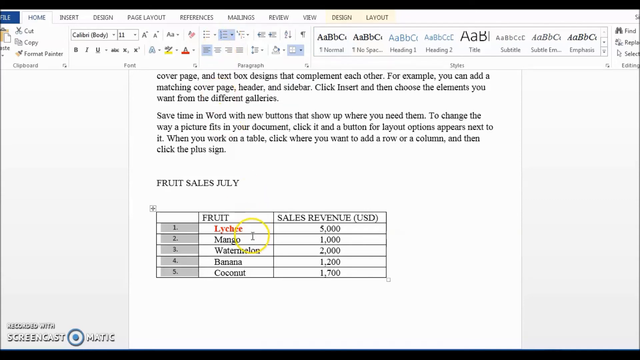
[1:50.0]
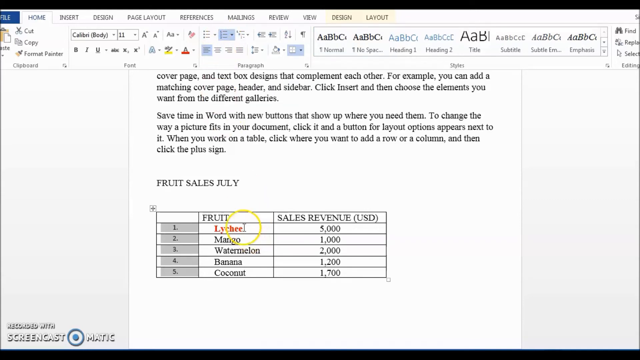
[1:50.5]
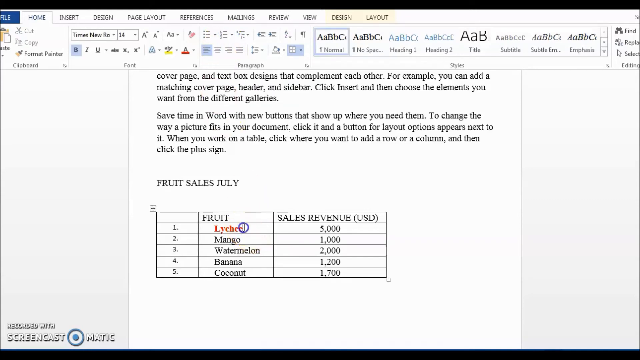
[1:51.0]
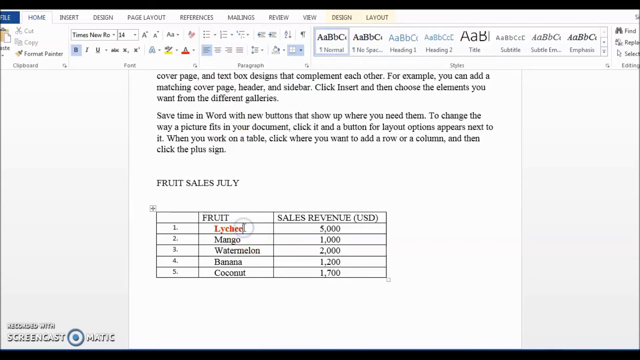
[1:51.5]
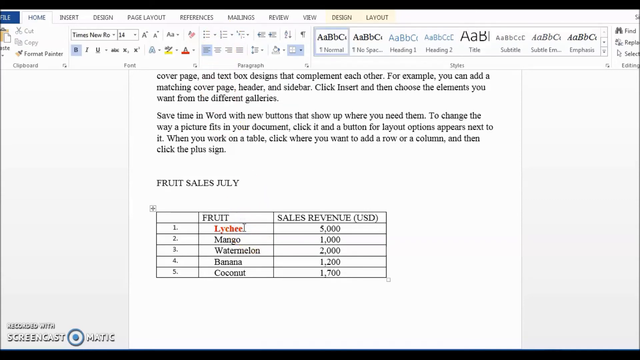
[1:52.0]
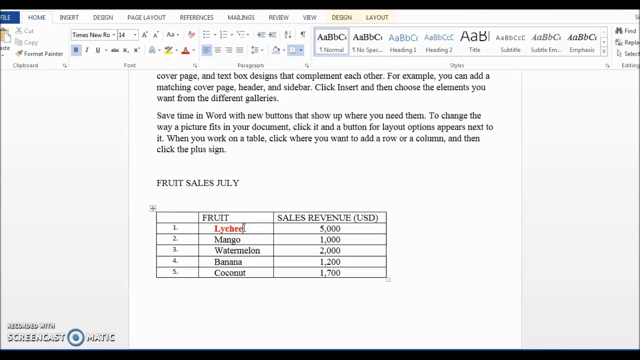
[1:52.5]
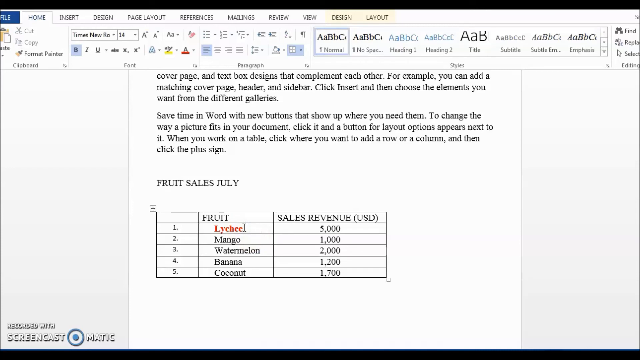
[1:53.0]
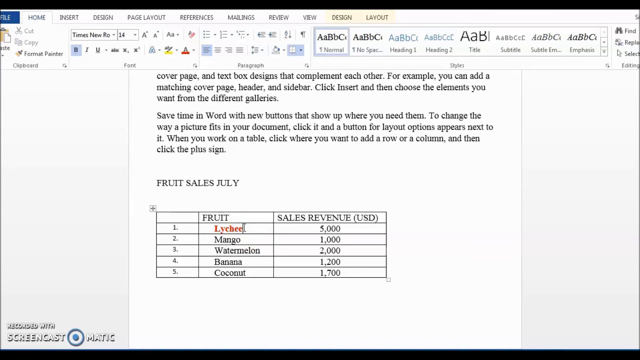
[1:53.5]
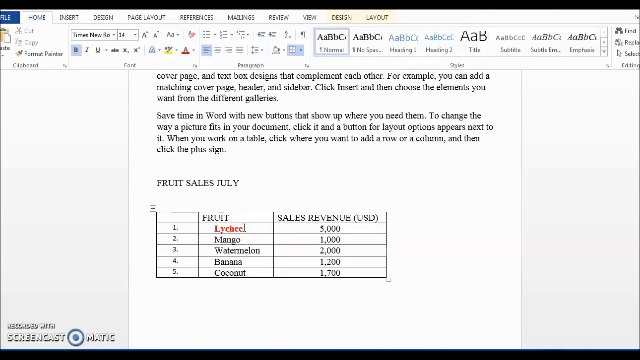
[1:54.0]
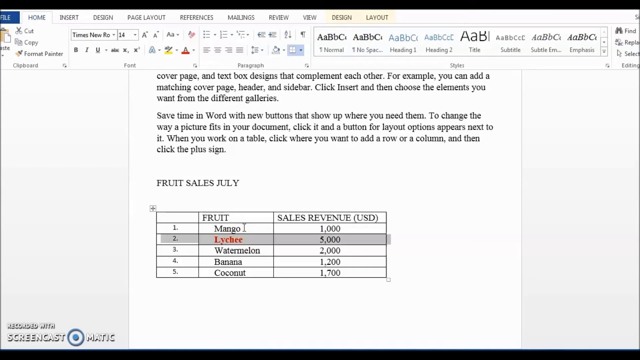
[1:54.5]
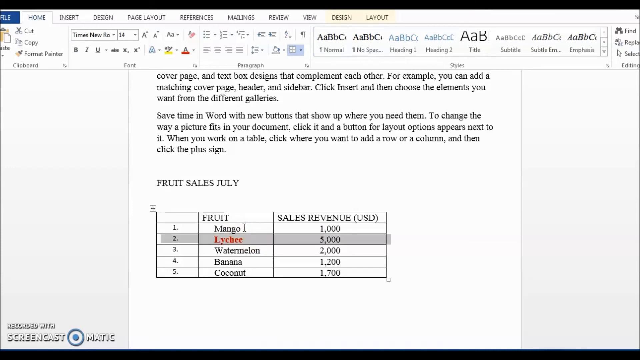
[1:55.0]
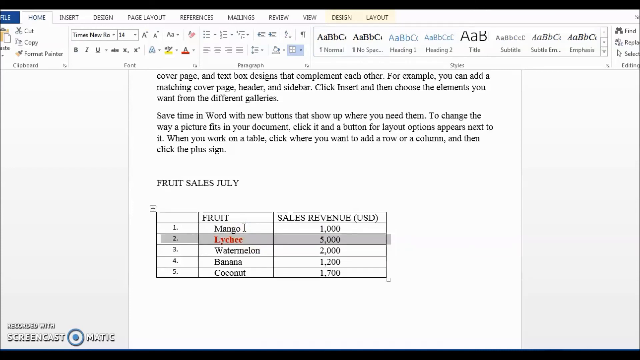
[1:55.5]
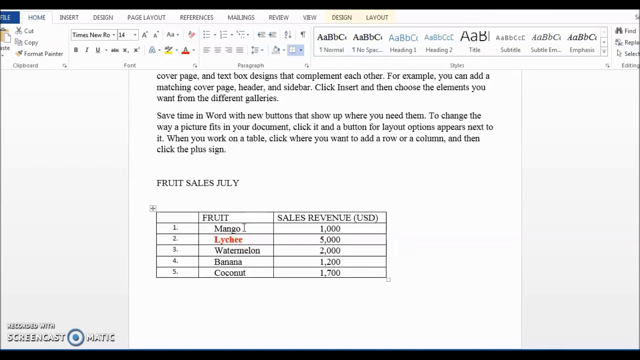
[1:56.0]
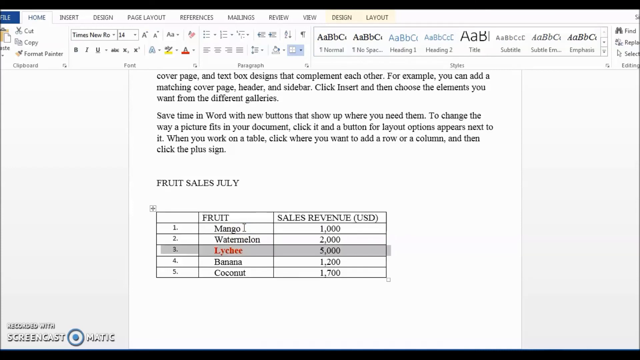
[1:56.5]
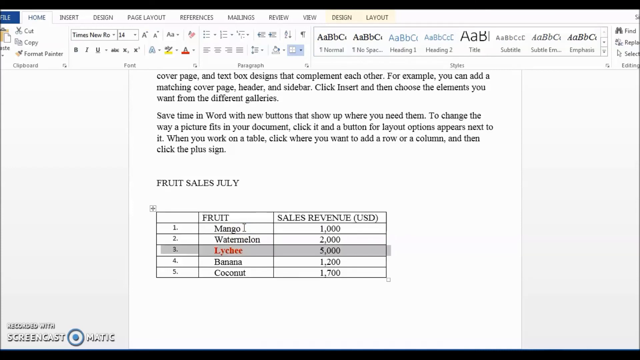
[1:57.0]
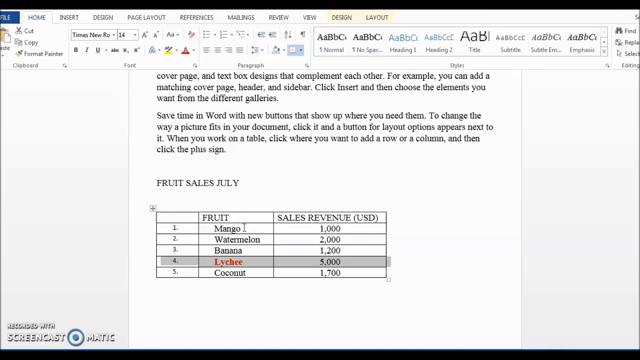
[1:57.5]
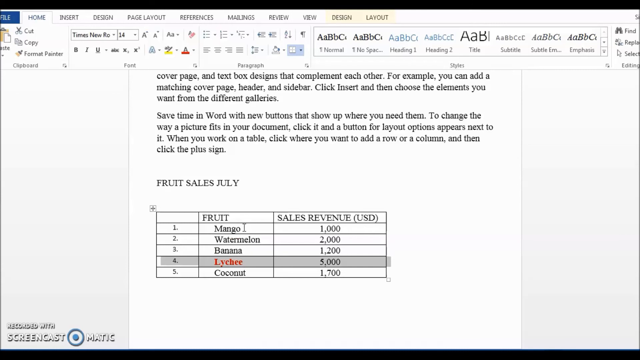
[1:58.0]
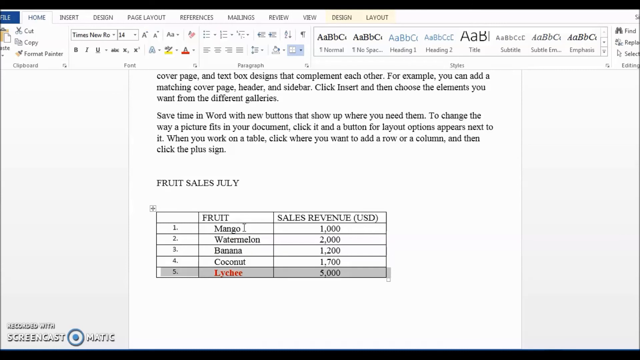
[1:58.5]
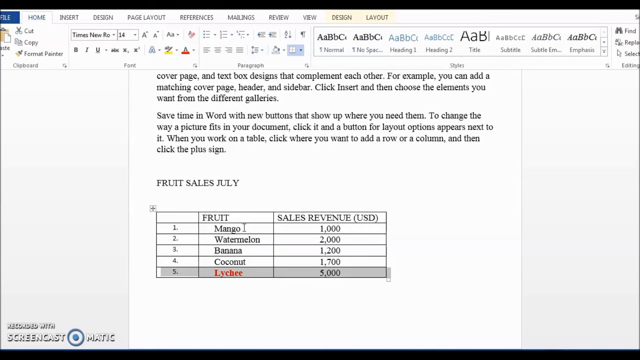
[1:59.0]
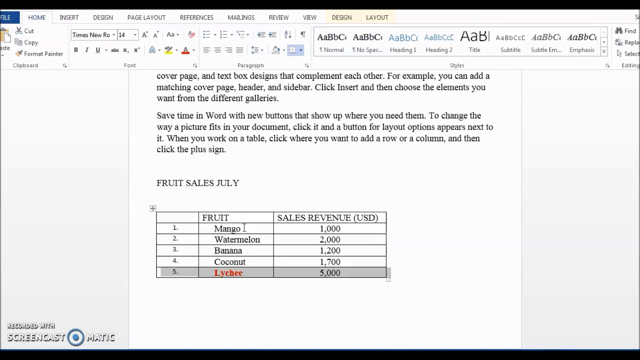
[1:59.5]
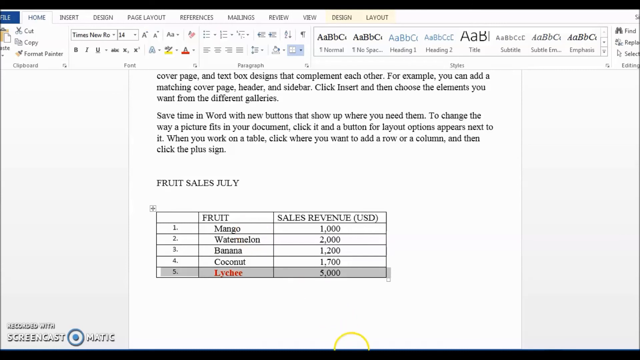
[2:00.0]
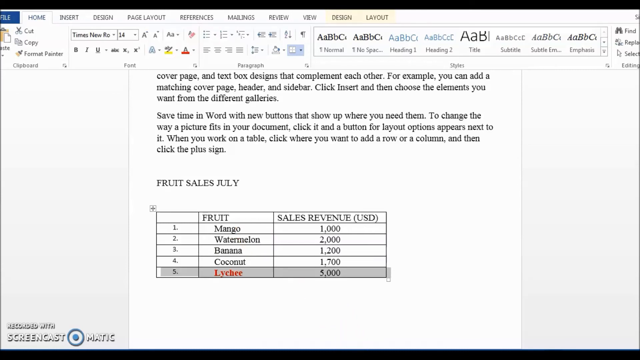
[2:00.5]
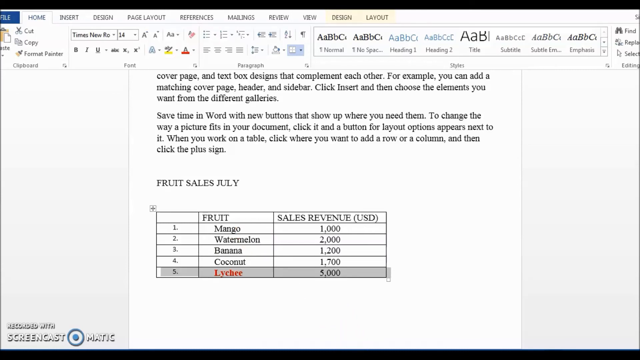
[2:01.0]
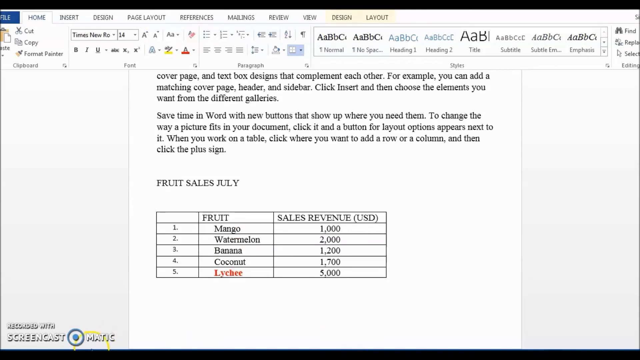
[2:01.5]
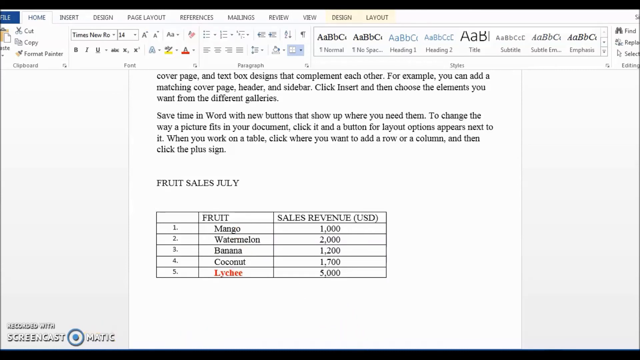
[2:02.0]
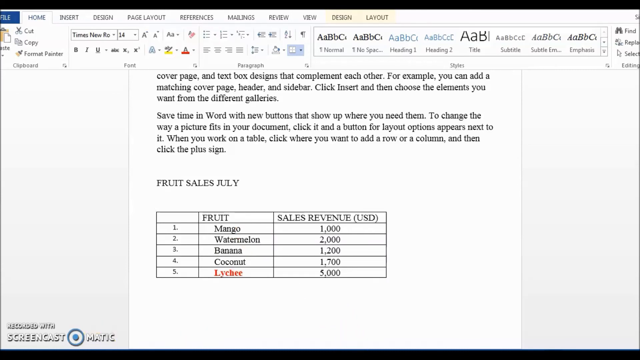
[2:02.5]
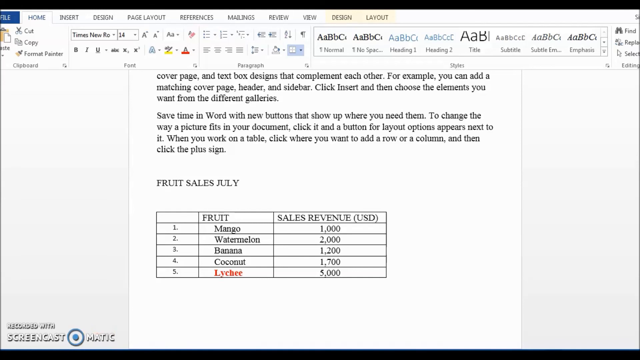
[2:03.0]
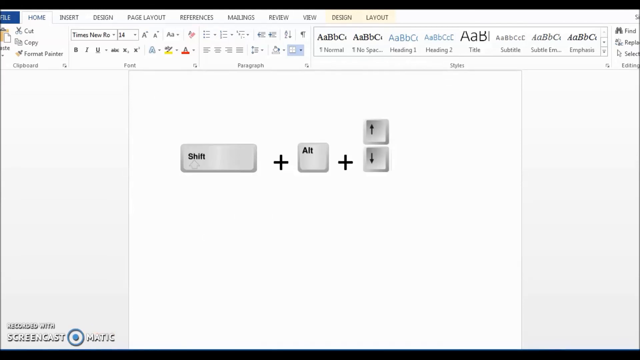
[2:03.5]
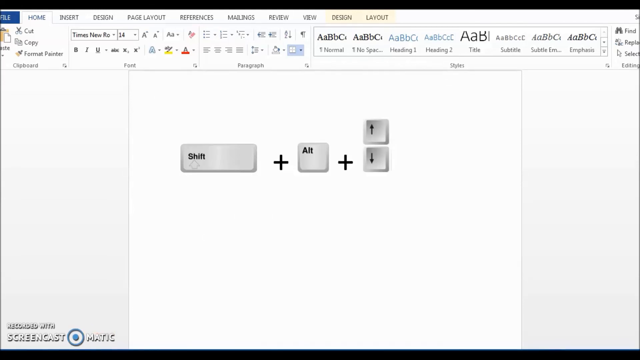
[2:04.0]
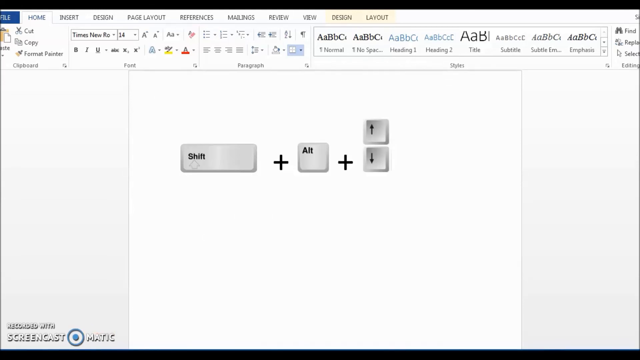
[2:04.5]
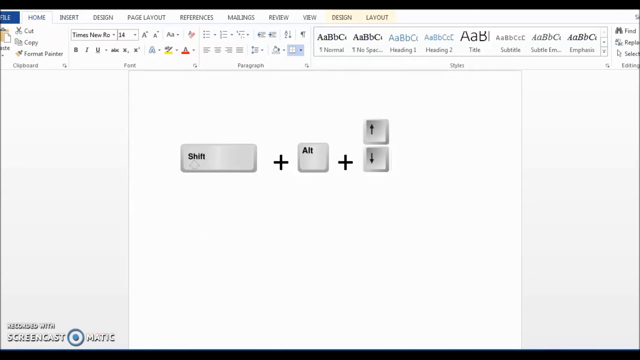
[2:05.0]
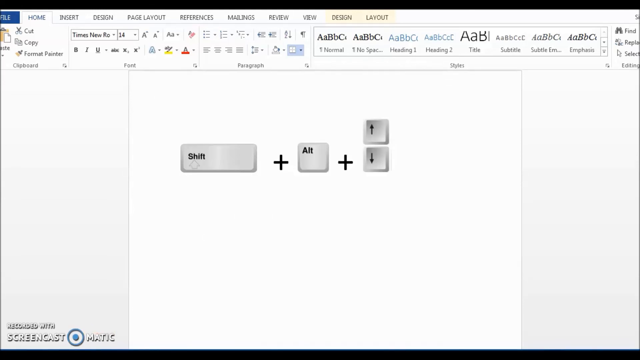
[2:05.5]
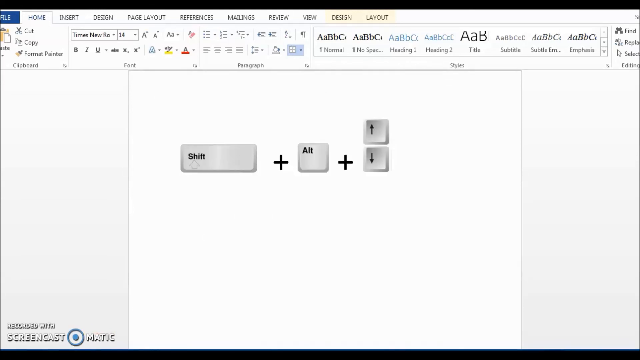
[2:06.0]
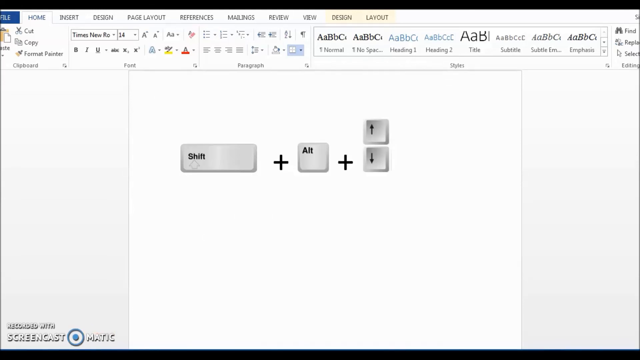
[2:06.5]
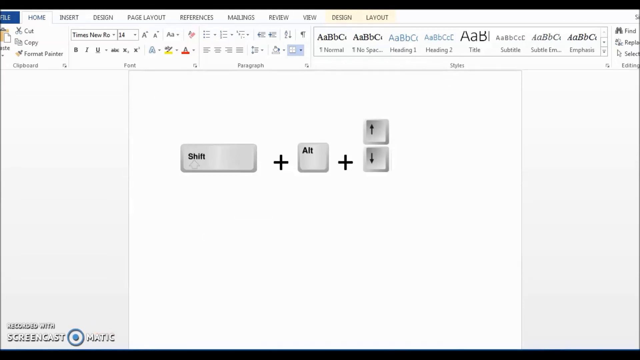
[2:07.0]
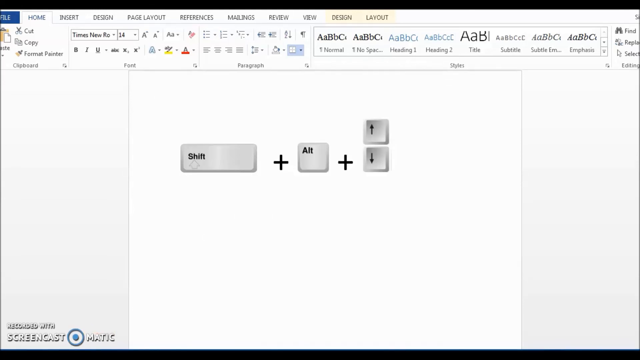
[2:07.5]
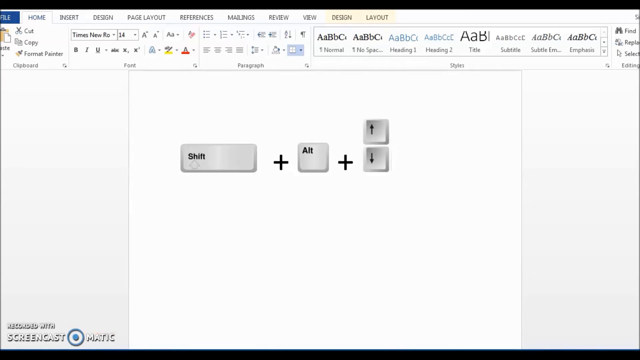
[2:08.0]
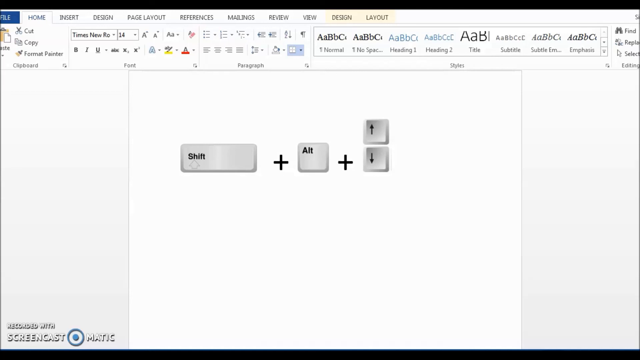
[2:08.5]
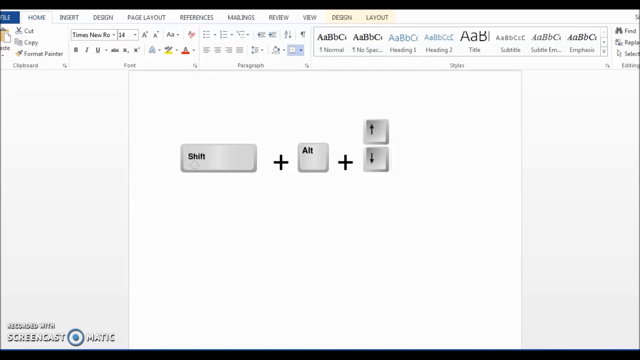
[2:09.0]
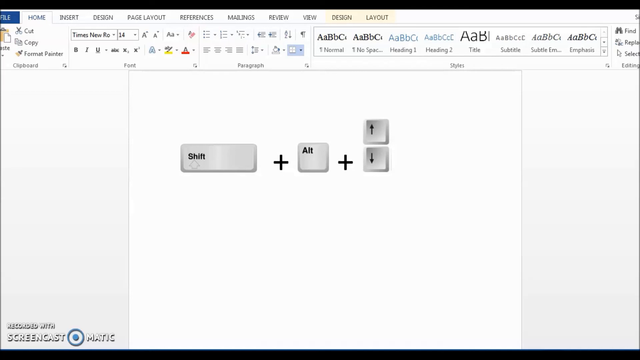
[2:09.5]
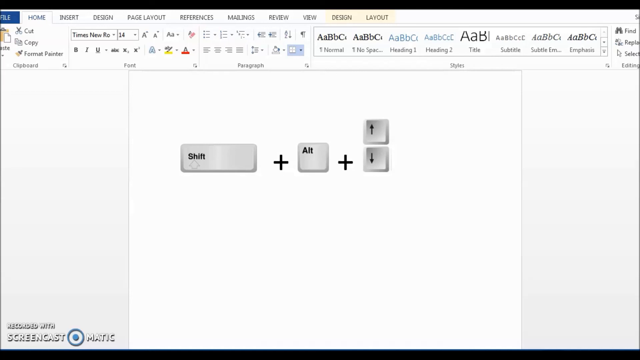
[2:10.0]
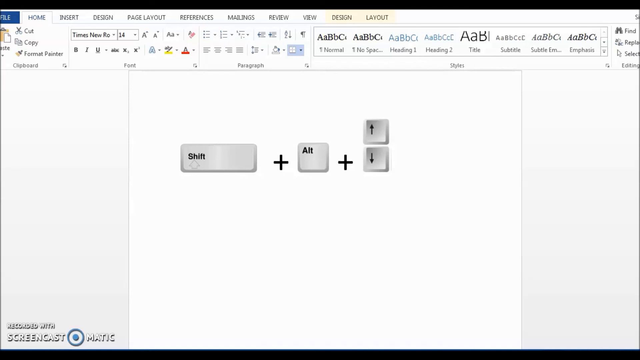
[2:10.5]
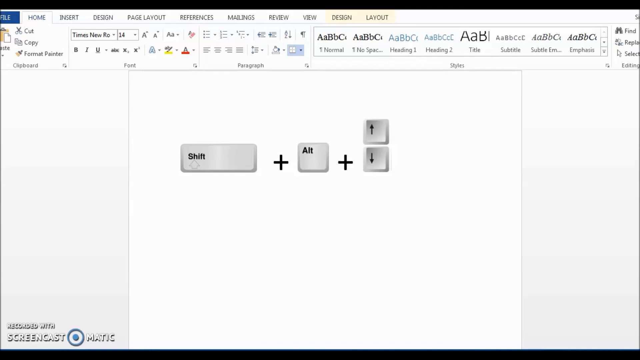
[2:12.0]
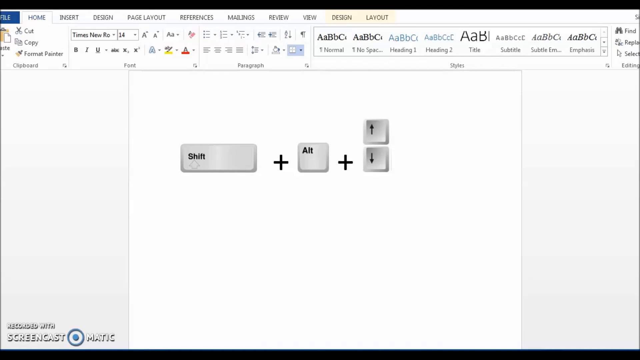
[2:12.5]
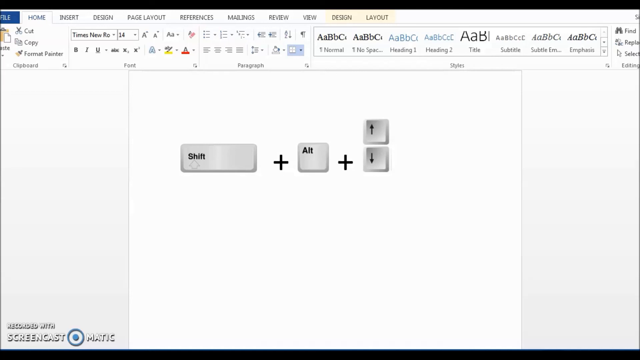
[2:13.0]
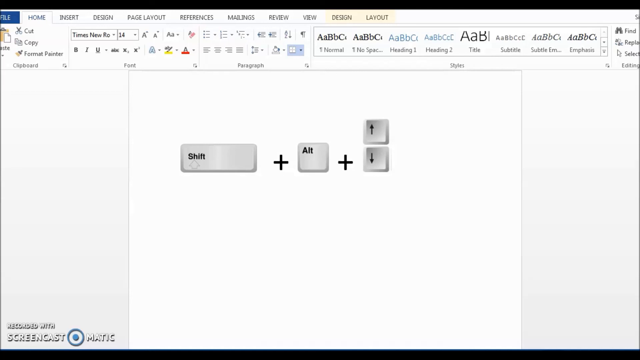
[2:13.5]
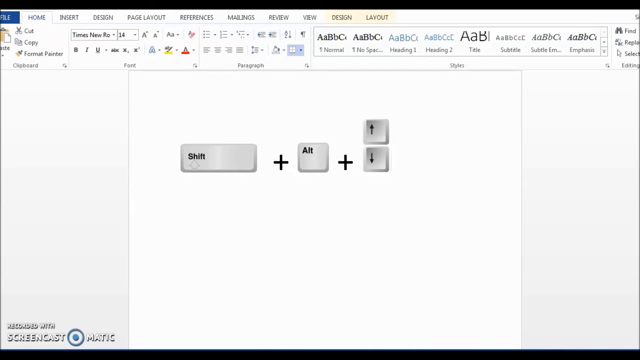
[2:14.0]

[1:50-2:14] The Microsoft Word demonstration continues, showing how to copy and paste text. Something new then appears on the screen: the key combination Shift plus Alt plus the up or down arrow keys.